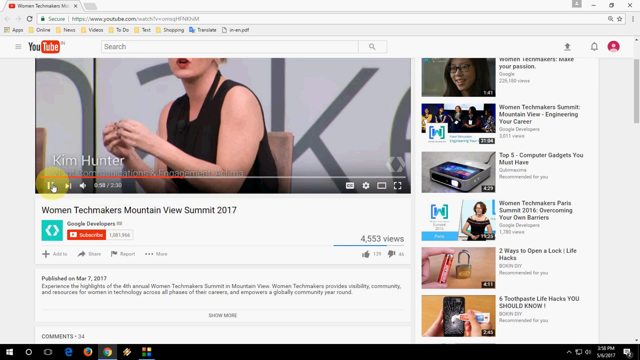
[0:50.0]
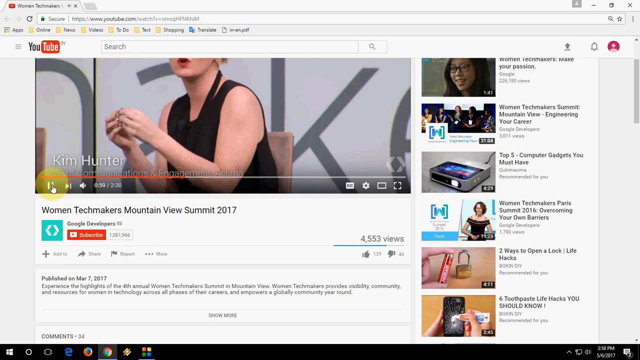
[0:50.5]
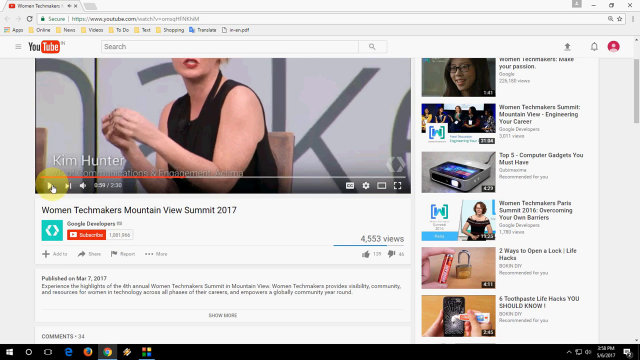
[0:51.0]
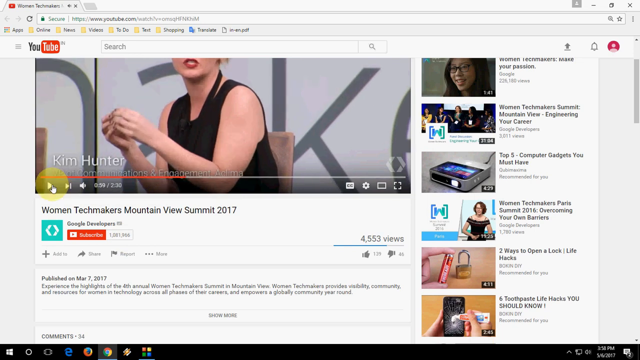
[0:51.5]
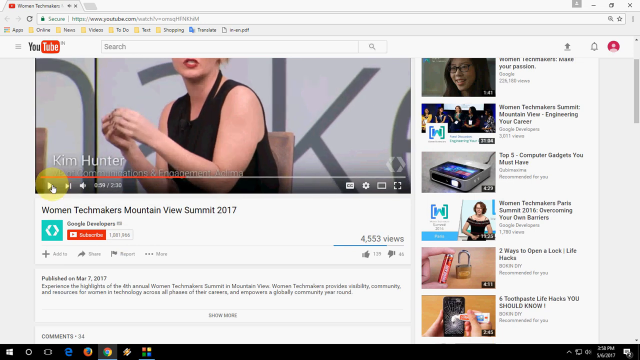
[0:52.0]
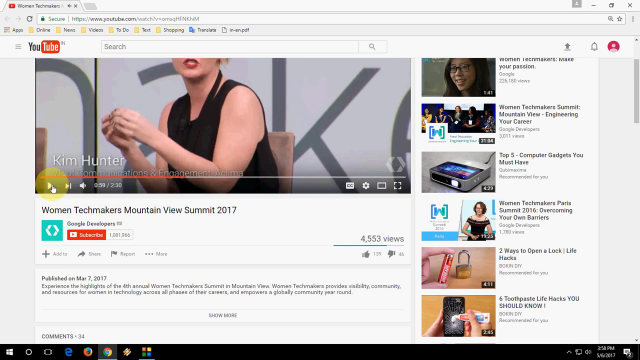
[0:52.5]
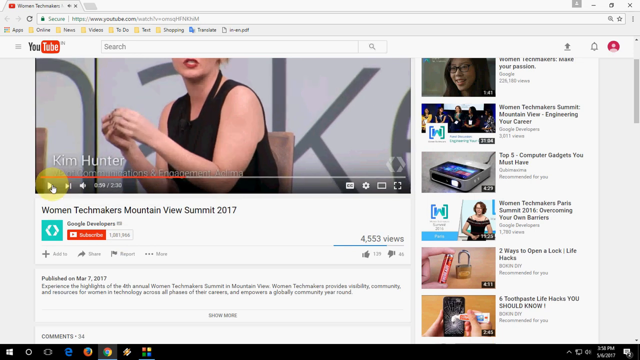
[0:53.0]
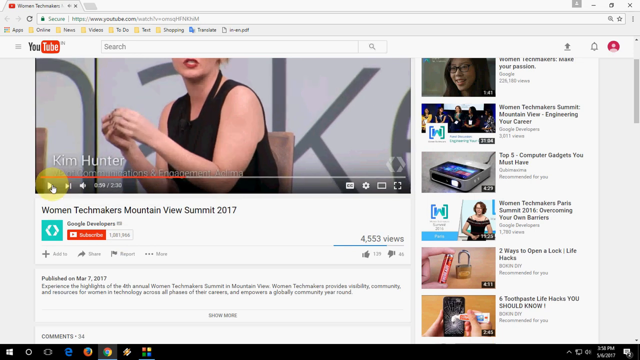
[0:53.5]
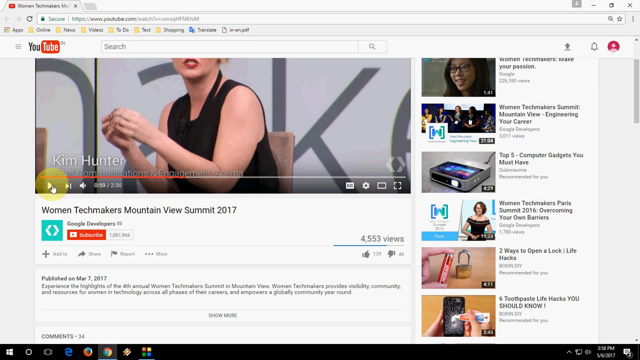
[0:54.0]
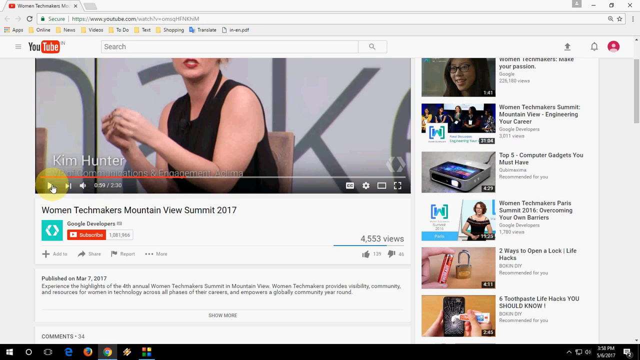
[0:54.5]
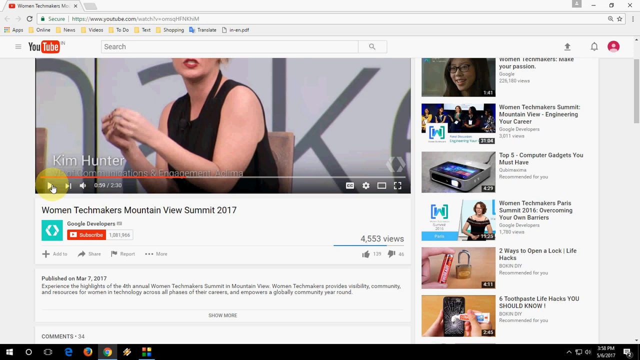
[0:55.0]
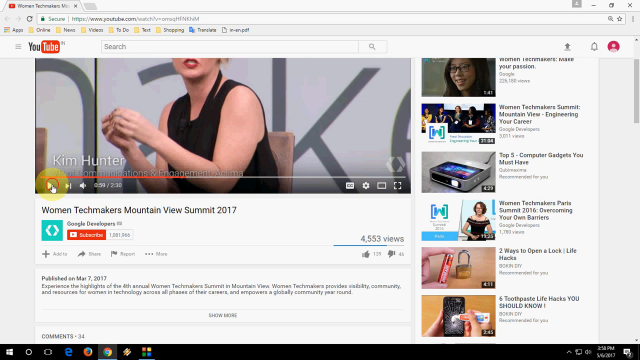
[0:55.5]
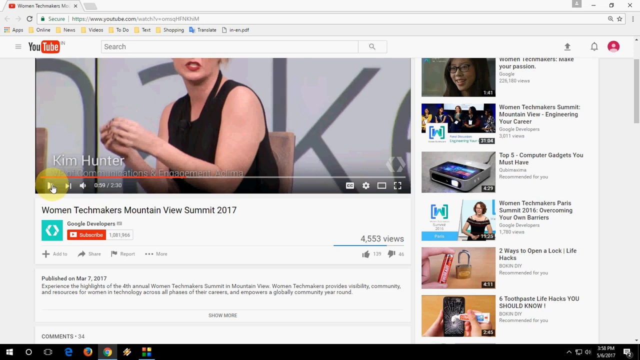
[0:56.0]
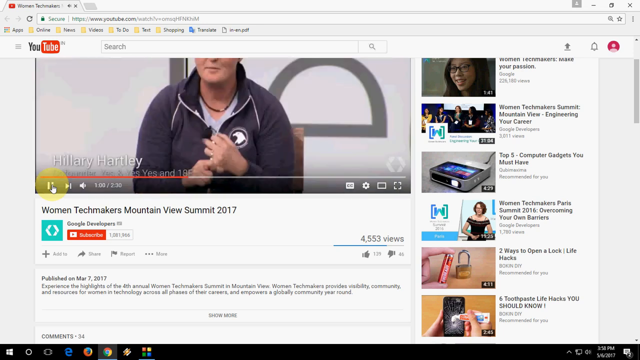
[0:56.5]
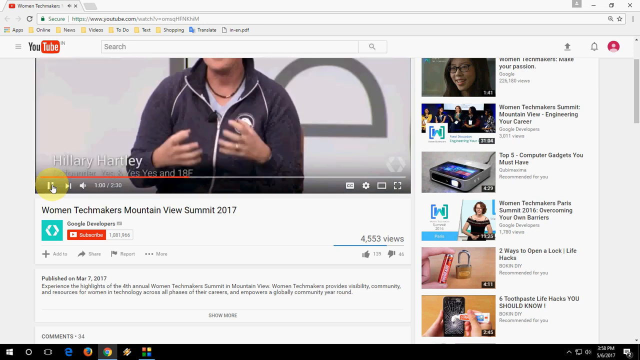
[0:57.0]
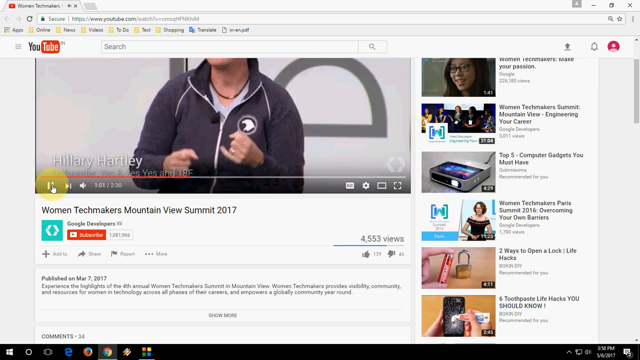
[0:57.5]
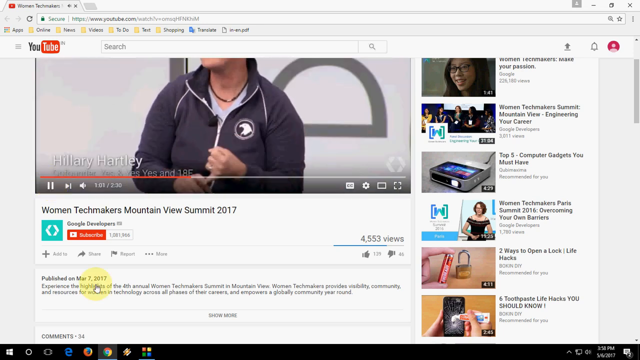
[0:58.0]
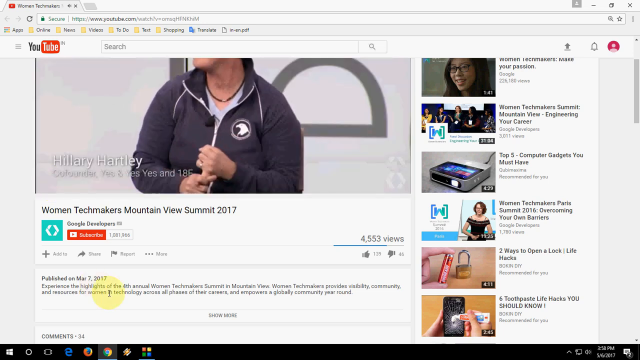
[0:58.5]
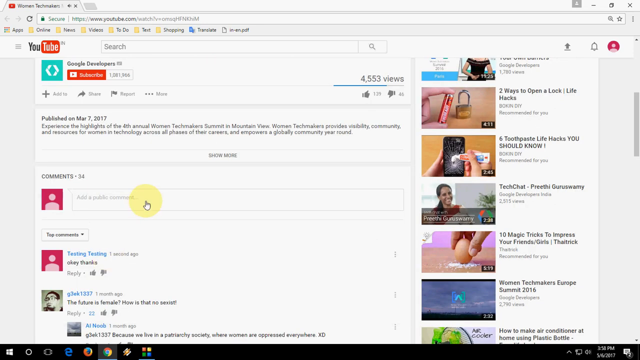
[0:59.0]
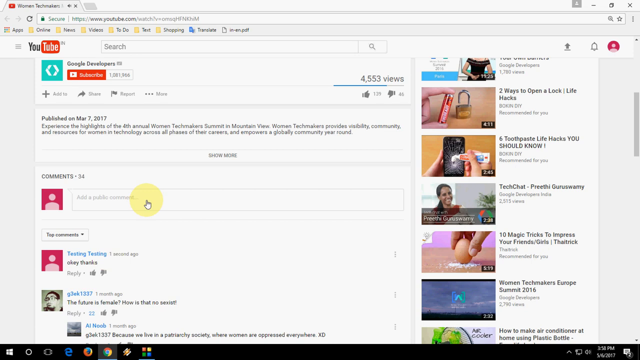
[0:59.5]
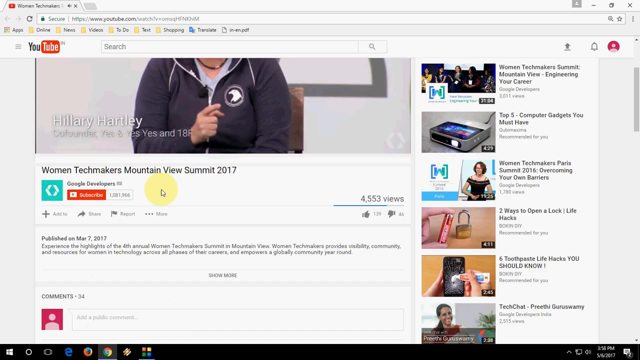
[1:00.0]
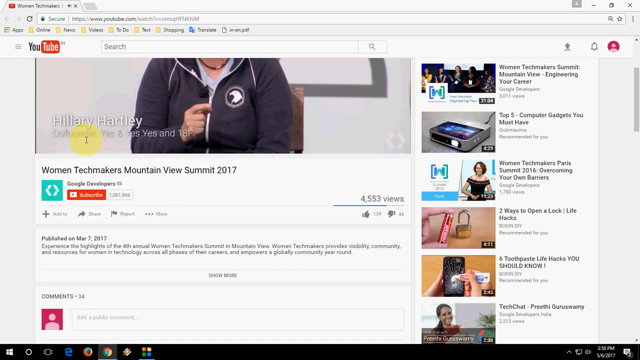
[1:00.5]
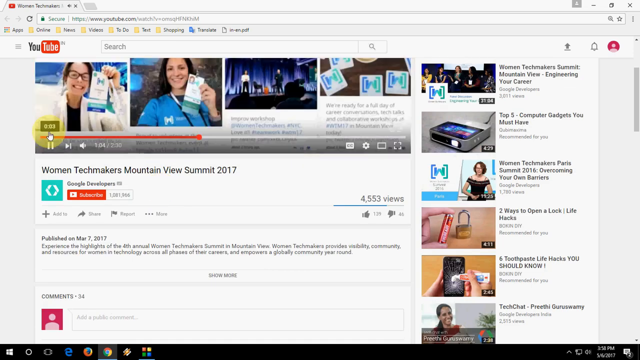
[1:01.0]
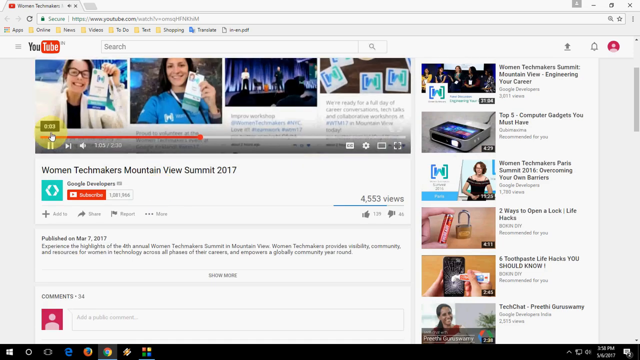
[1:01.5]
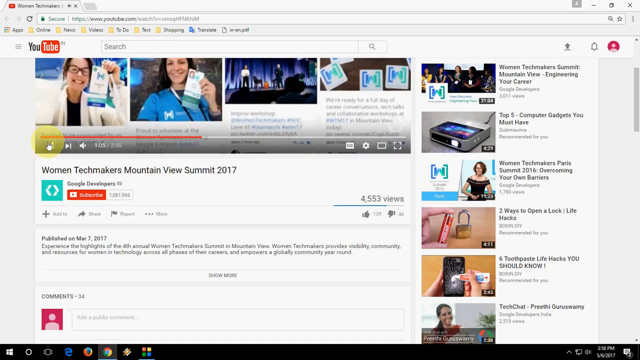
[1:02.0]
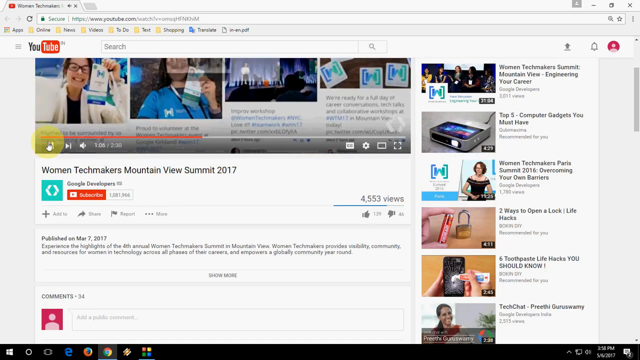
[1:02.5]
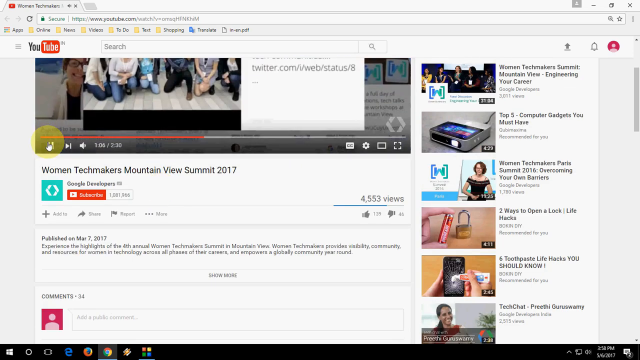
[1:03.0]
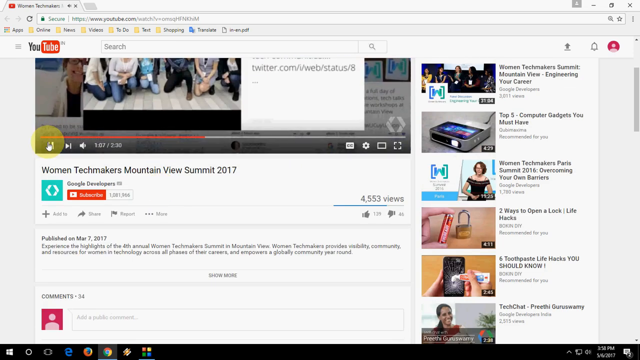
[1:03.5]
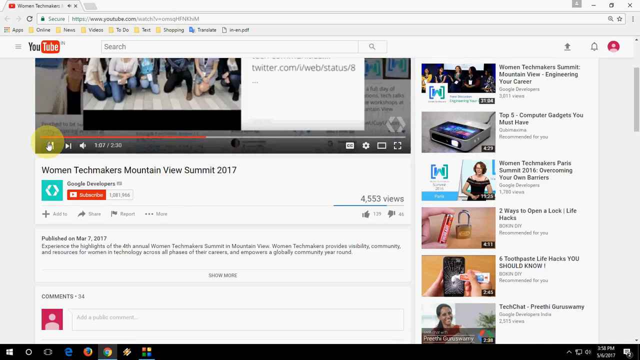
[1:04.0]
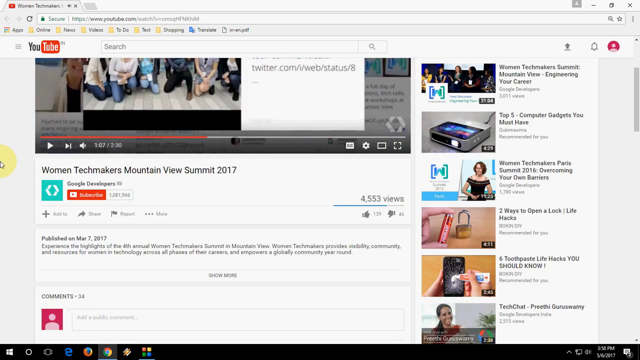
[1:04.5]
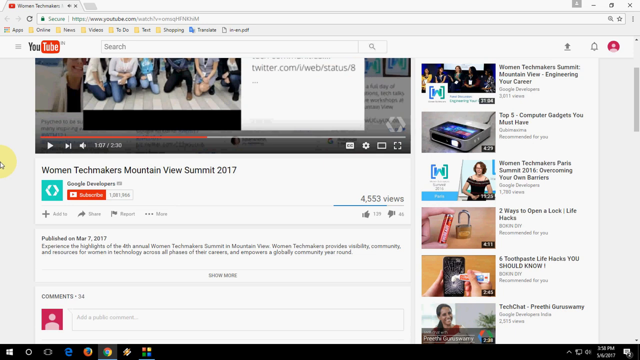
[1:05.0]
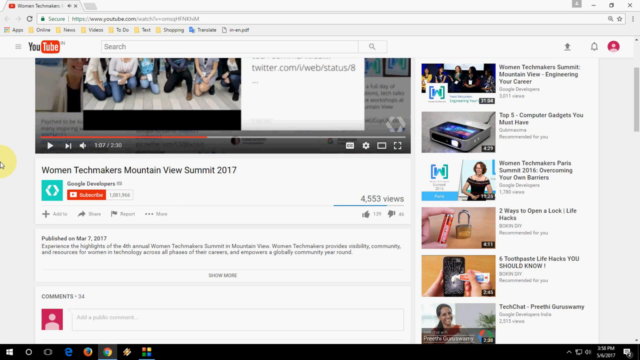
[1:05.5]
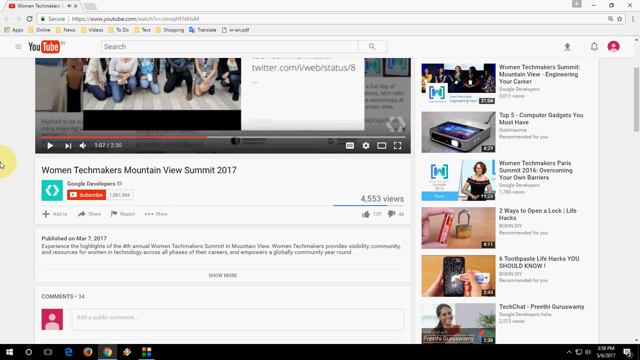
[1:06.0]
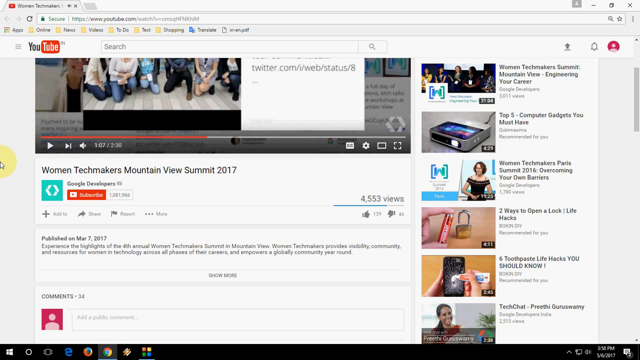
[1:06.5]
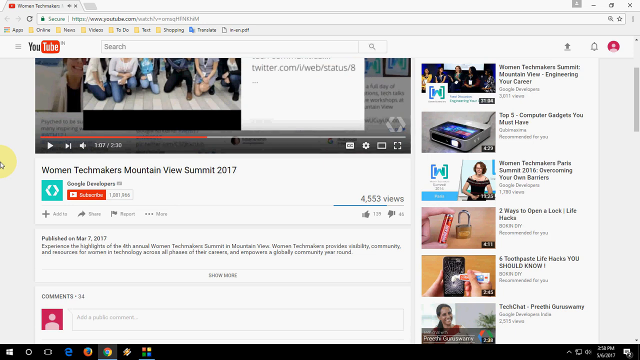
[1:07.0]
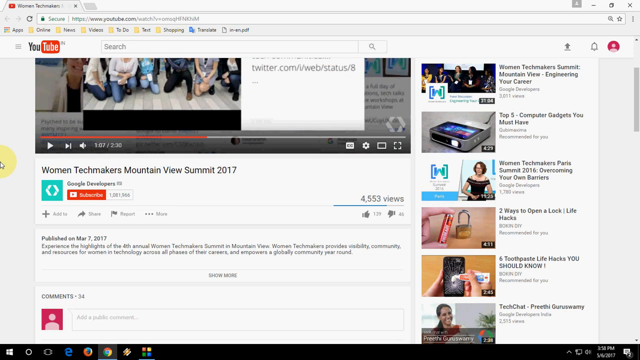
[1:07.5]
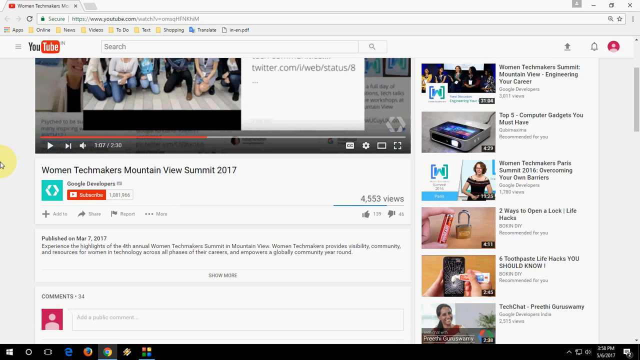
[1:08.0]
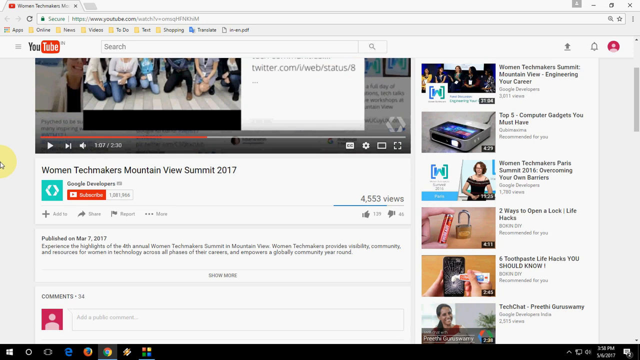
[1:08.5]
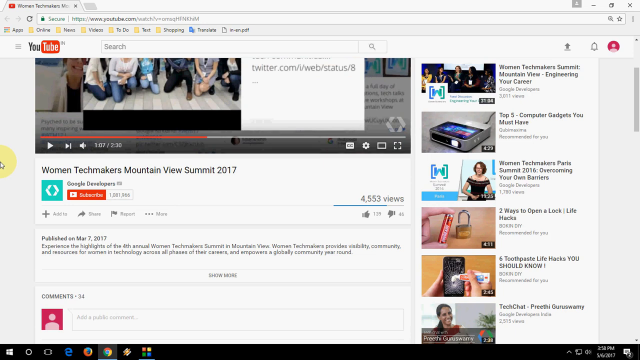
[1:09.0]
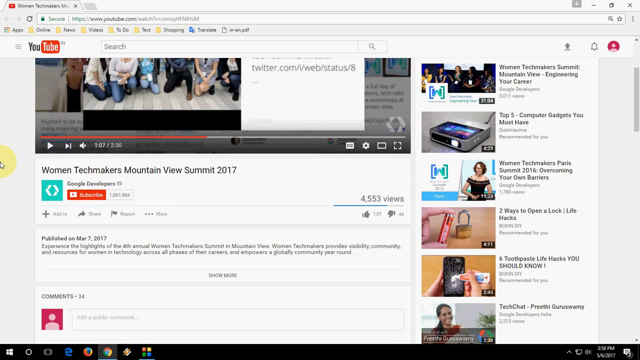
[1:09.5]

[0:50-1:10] Further along in the screen capture of the YouTube video of the Women Techmakers Mountain View Summit 2017, the video is about halfway through. The cursor has a large yellow highlight around it so its actions can be followed. The video has been paused, and the person has scrolled down to look at the comments. Possibly the person recording was one of the original presenters shown in the YouTube video and is showing their responses to comments written underneath it. The page is in the standard YouTube layout with suggested videos on the right-hand side. The browser is apparently an old version of Google Chrome in daytime mode, so everything is very bright and white. Some files are visible along the top, and the only tab open is this one video.